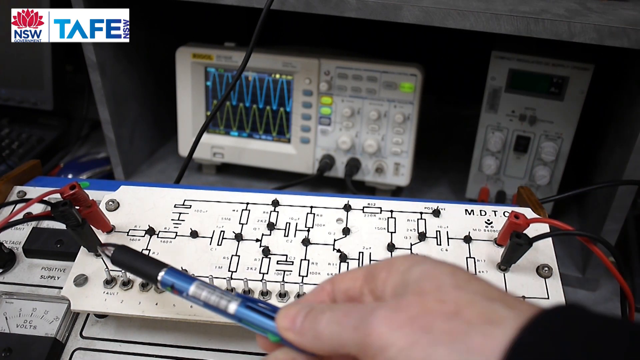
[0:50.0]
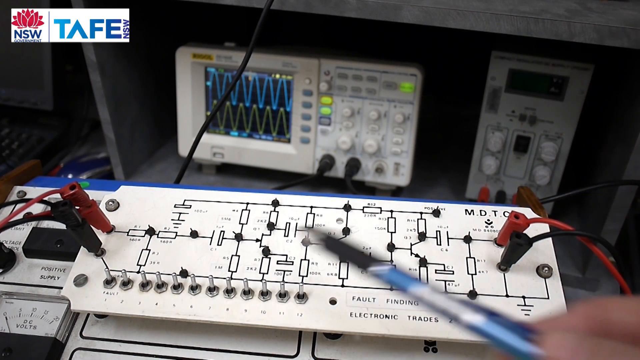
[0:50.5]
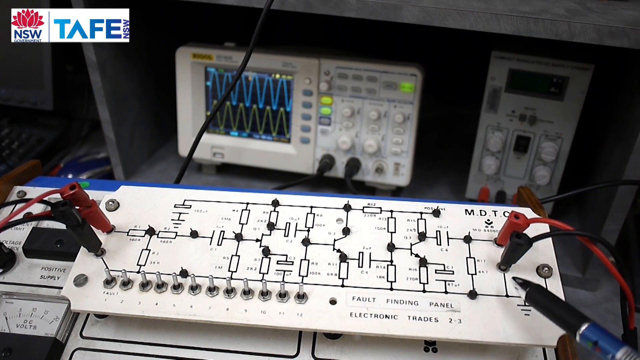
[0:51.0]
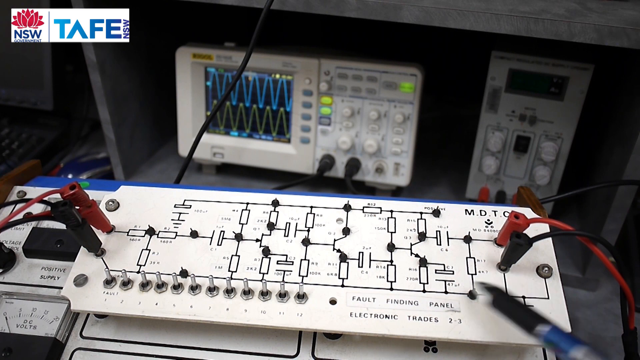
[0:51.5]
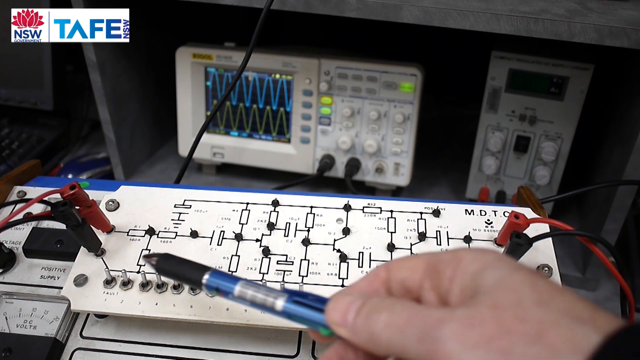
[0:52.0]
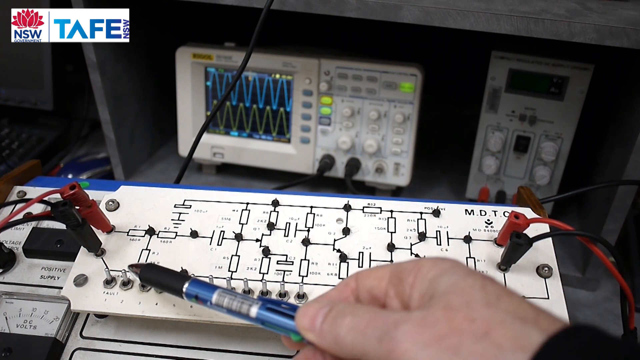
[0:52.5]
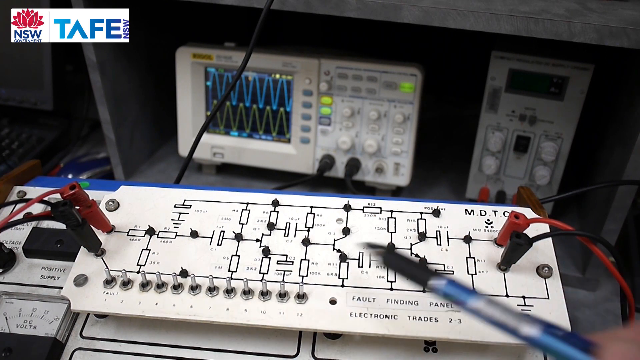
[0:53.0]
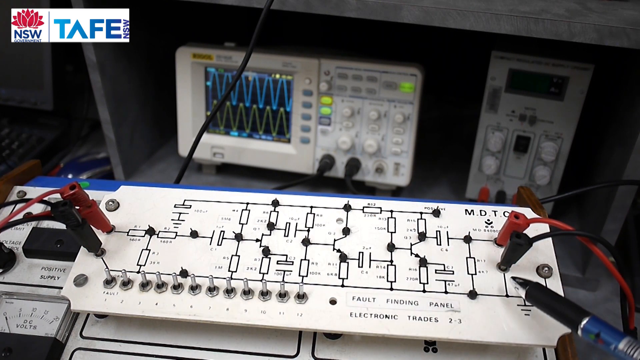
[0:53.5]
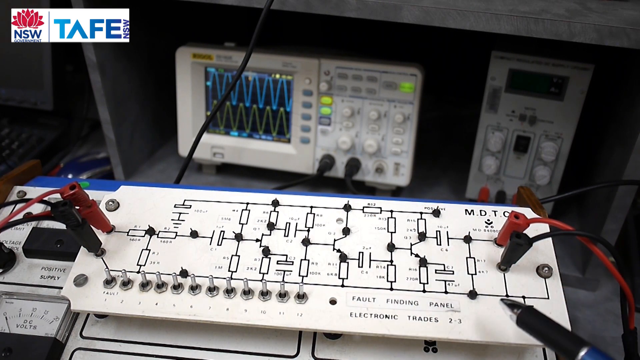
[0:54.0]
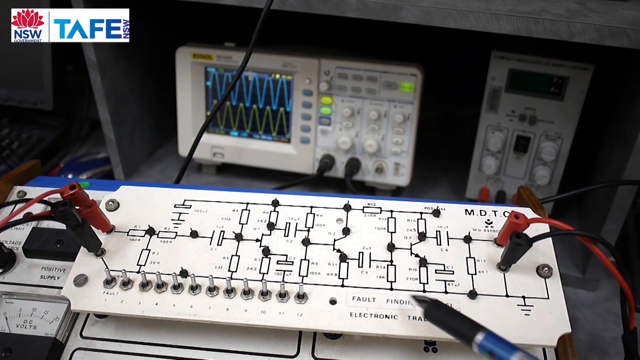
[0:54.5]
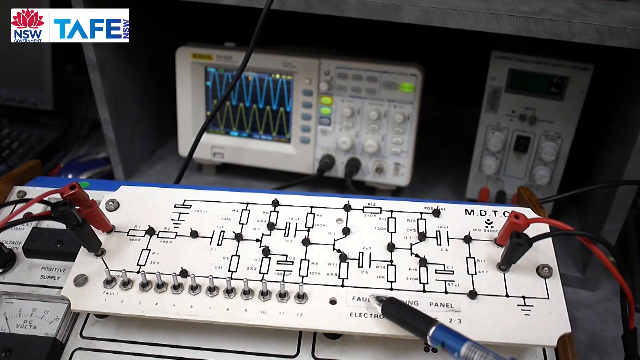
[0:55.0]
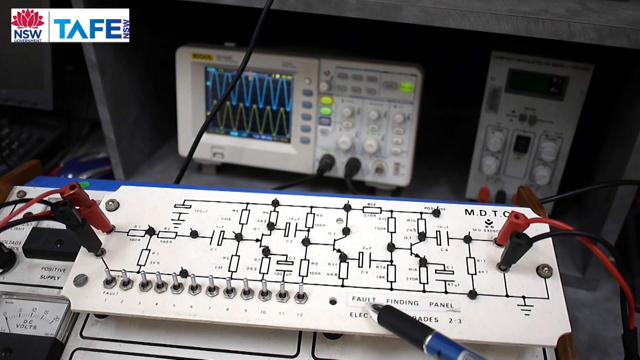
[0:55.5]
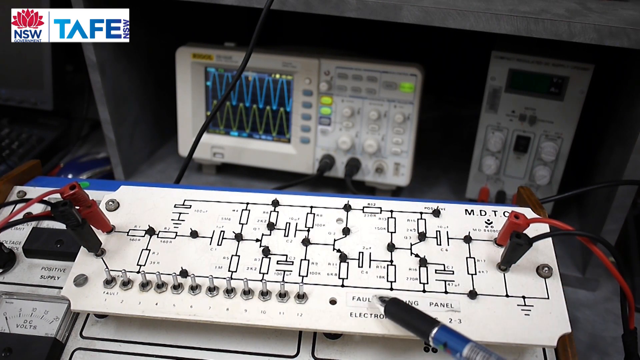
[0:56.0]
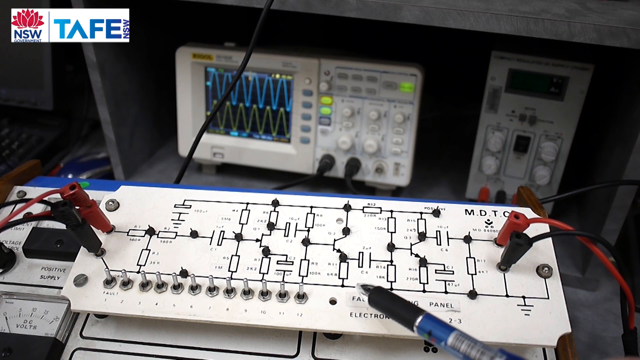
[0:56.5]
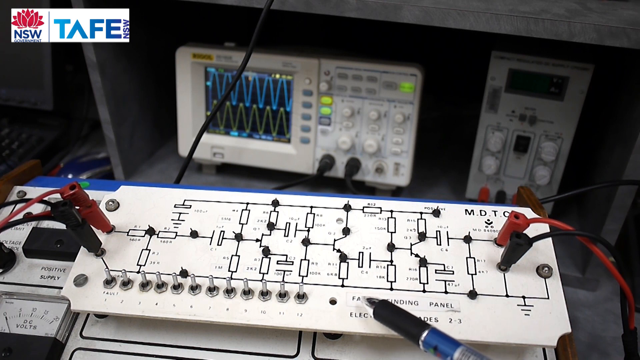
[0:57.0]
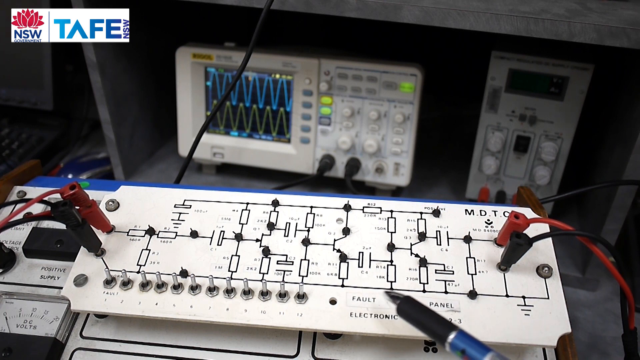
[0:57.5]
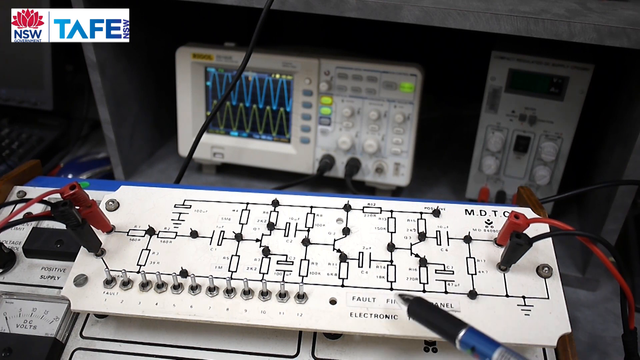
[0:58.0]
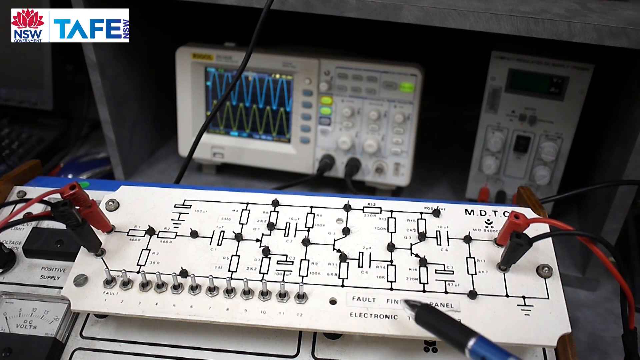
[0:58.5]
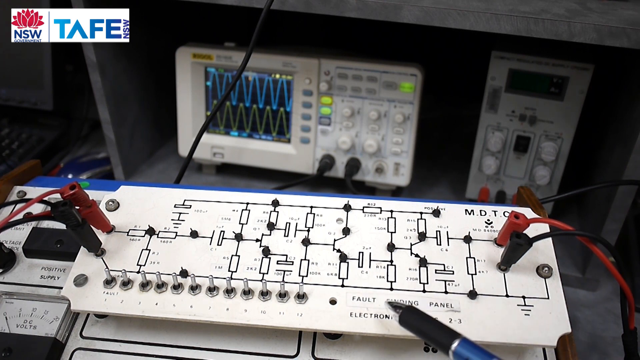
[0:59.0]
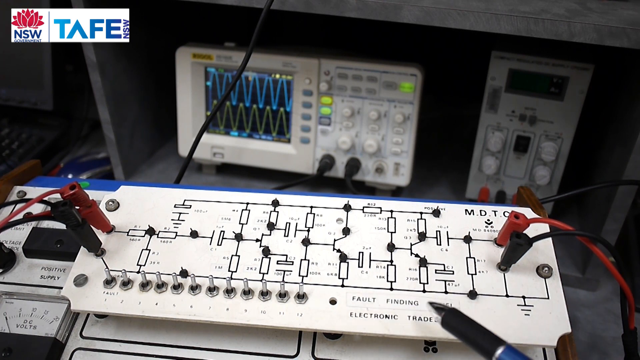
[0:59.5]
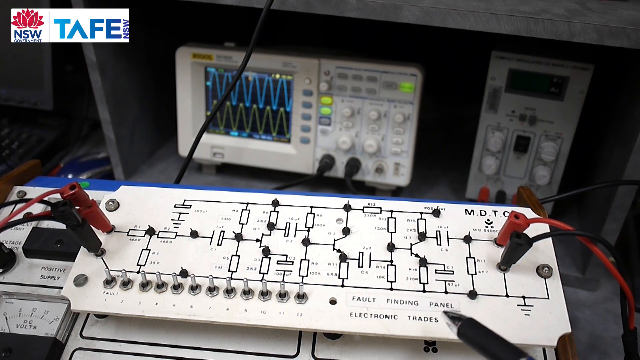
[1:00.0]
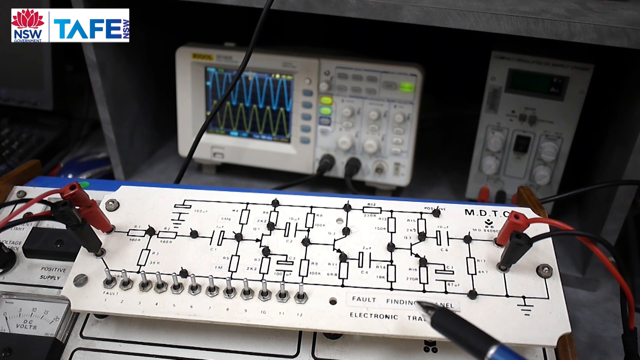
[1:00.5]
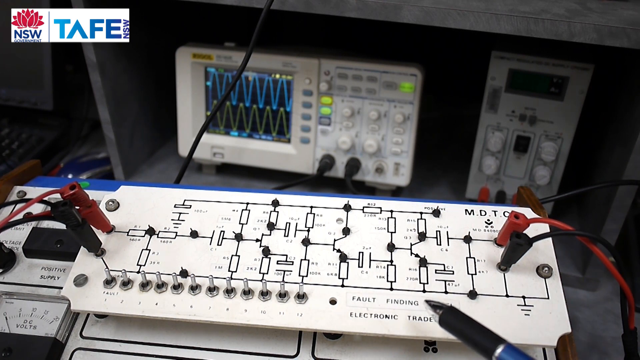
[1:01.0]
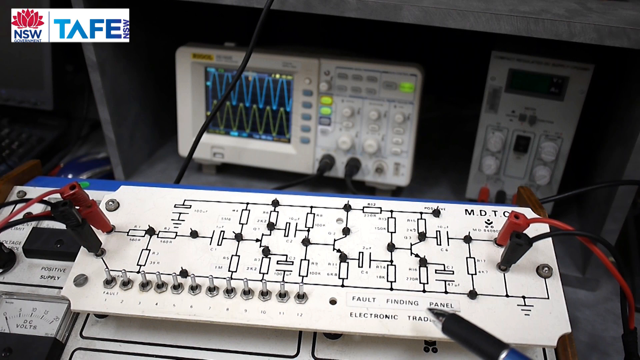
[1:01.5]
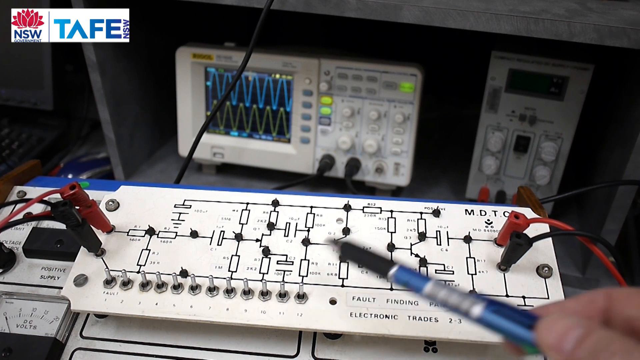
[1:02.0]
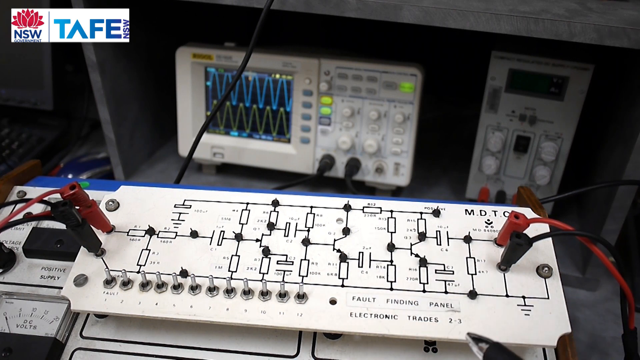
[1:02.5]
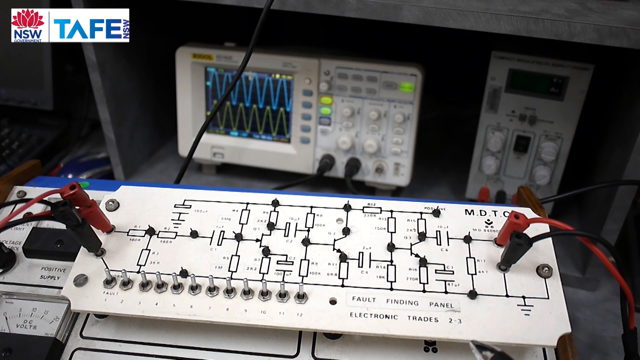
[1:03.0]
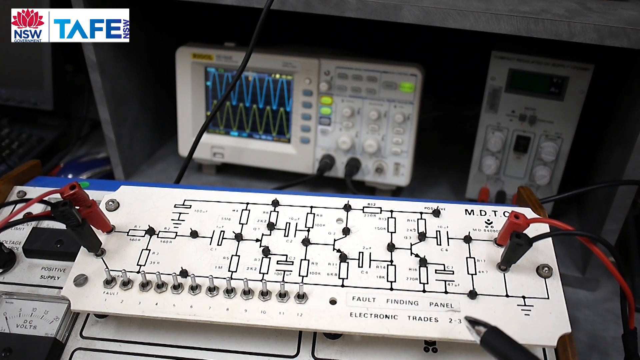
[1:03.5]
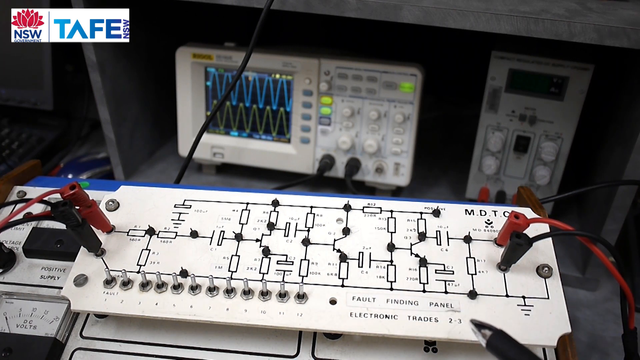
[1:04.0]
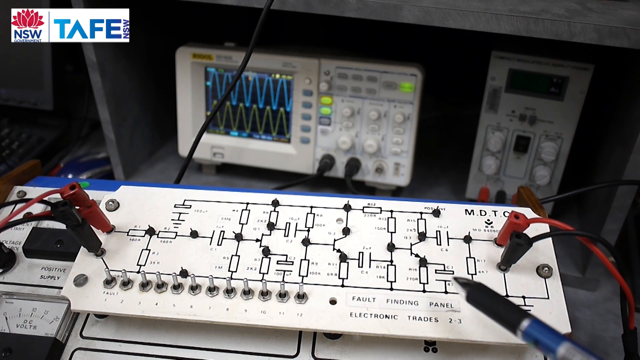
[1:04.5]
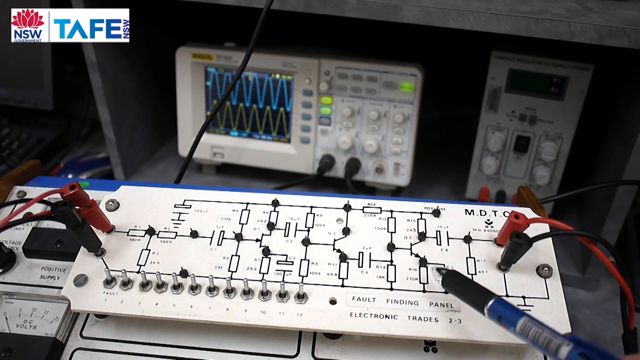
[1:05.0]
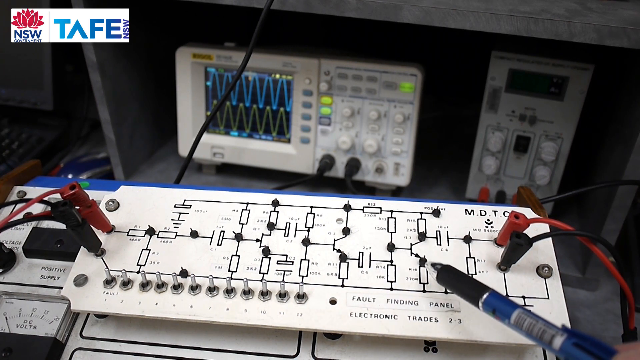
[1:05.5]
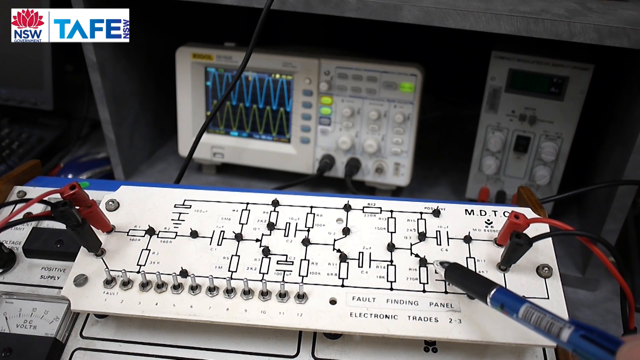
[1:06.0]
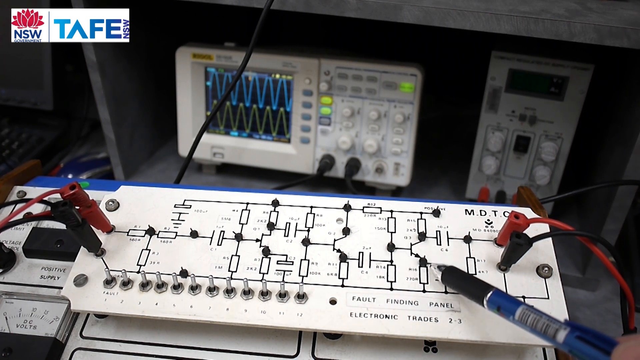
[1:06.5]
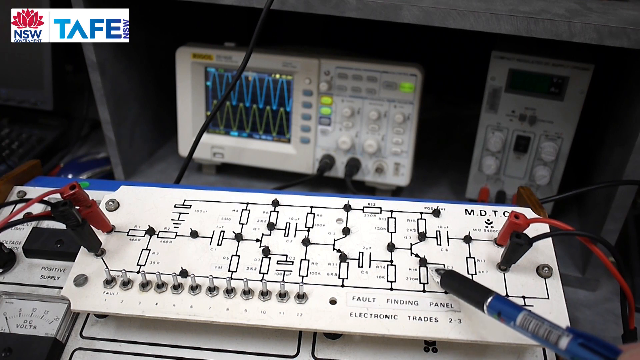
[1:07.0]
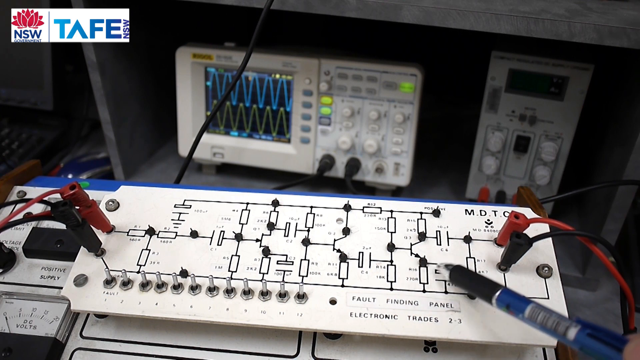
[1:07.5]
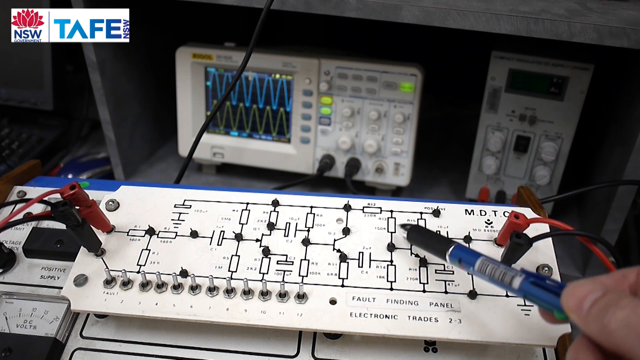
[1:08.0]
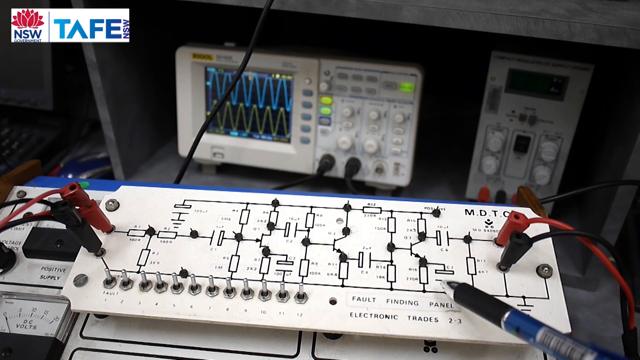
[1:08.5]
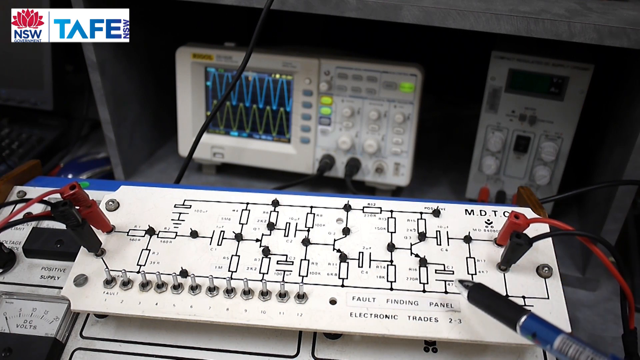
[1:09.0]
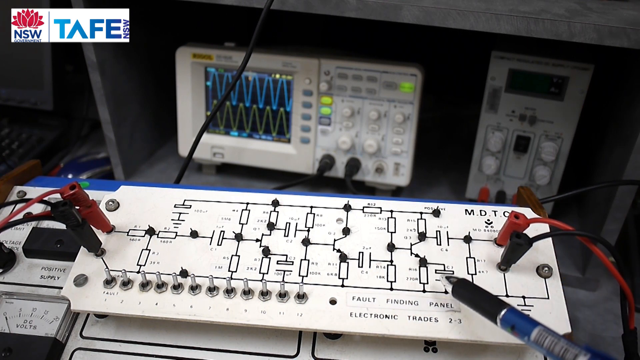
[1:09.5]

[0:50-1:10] The person continues using the pen to point to different parts of the panel. Moving from the left, they point to some of the knobs, then move back to the right and point to one of the little black dots on the panel. They move the pen down to the bottom of the panel, where words say "fault finding panel", move it across each of those words, and make almost a circular motion above them. They then point to one black dot and move along a black line to a connecting dot and then another. There is a bit of a blue border across the top of the panel, and to the left of the blue border is a green circular dot. Above the green dot is what appears to be almost like a computer mouse, maybe gray and blue, and to its left is what might be a laptop or a keyboard. The person keeps moving the pen point from left to right, pointing out different words and things on the panel.